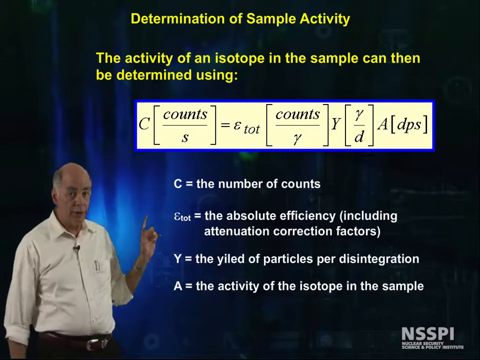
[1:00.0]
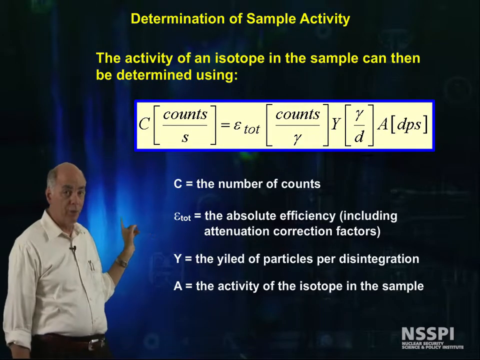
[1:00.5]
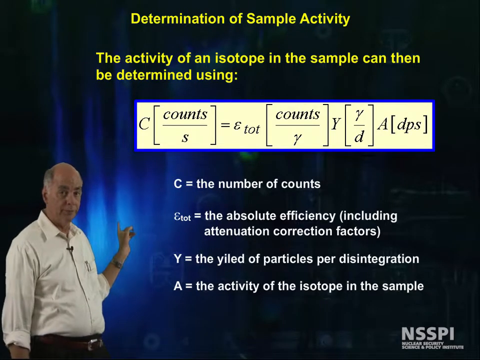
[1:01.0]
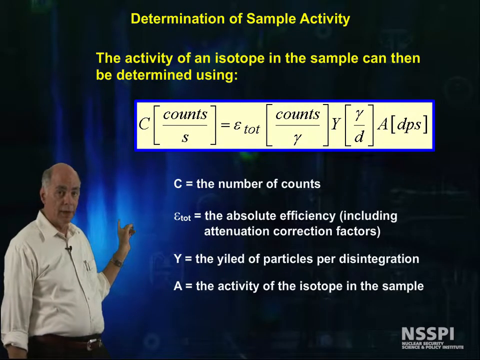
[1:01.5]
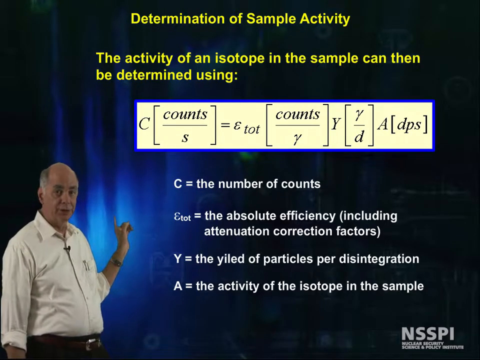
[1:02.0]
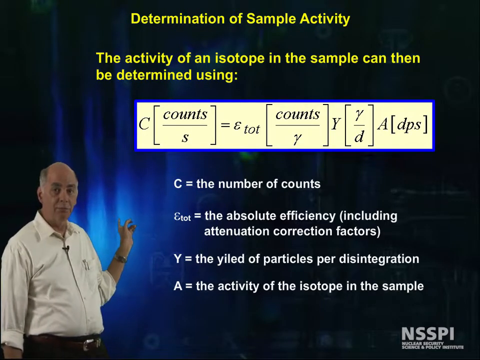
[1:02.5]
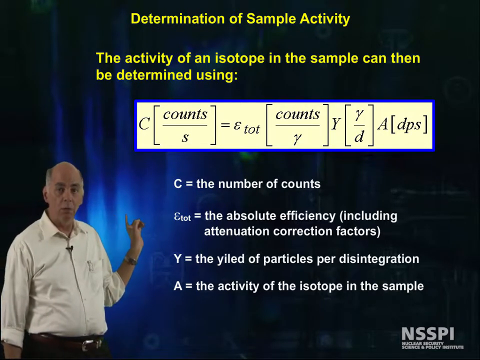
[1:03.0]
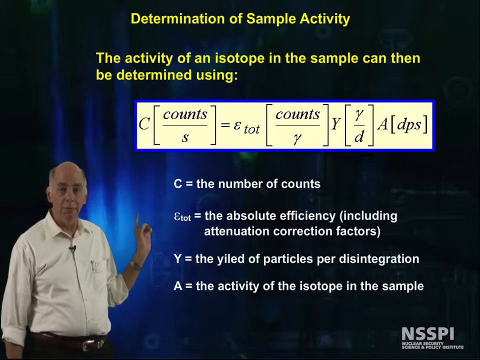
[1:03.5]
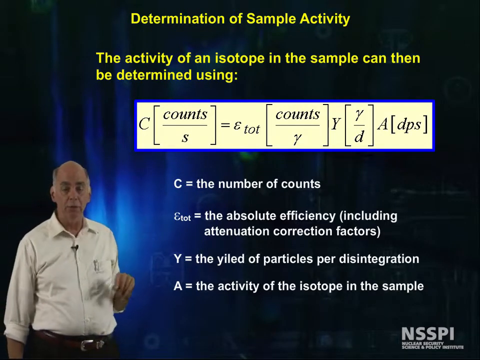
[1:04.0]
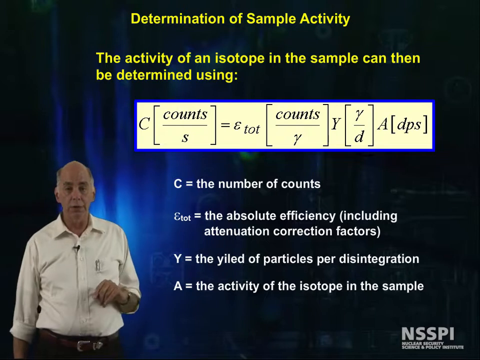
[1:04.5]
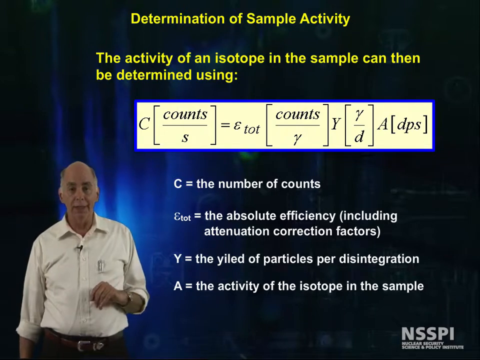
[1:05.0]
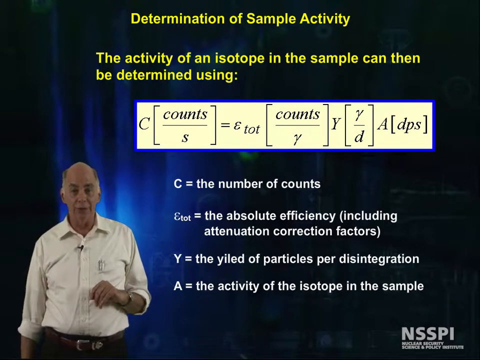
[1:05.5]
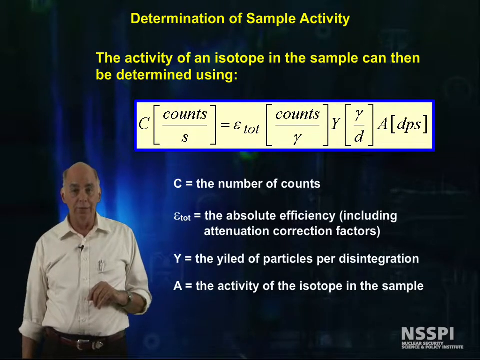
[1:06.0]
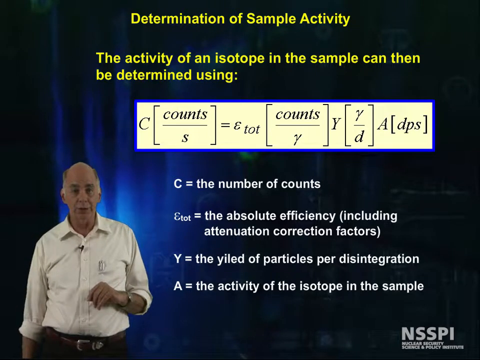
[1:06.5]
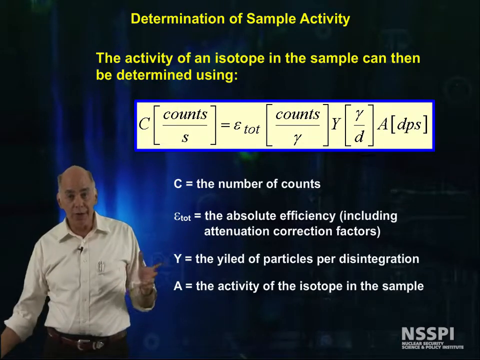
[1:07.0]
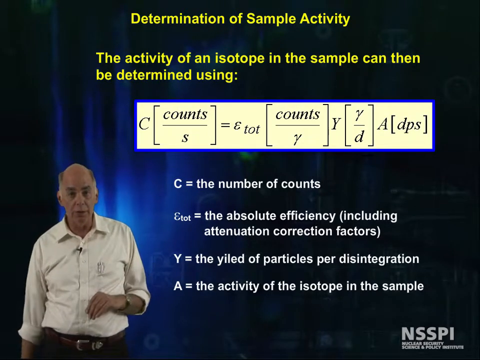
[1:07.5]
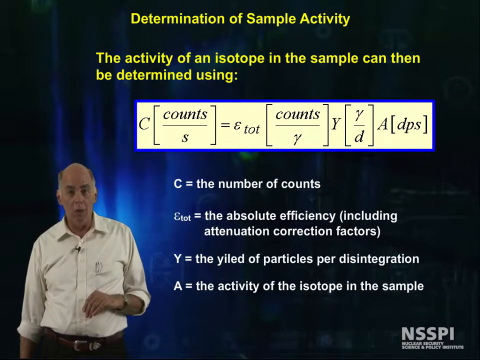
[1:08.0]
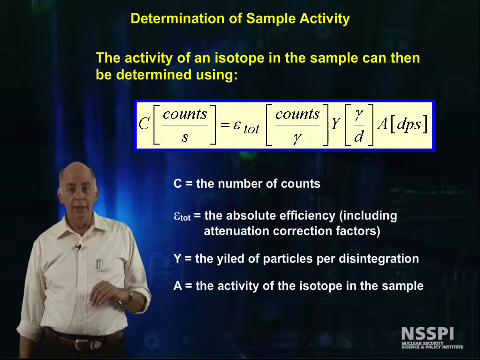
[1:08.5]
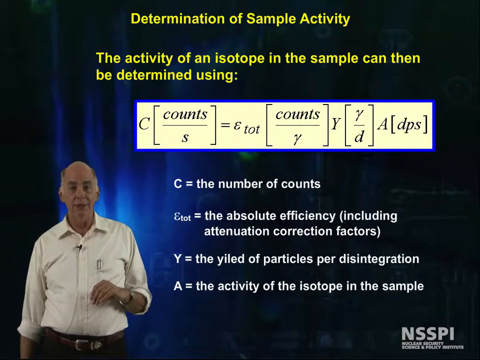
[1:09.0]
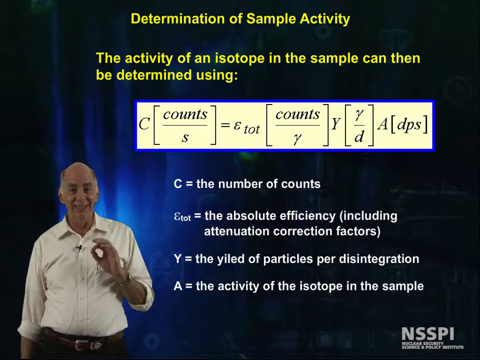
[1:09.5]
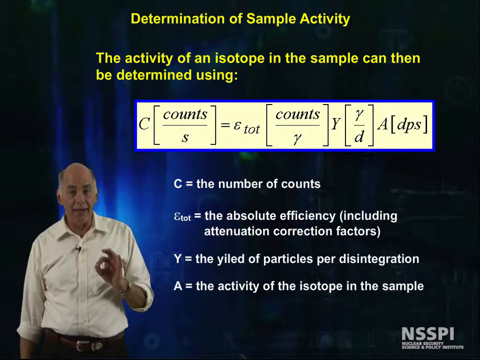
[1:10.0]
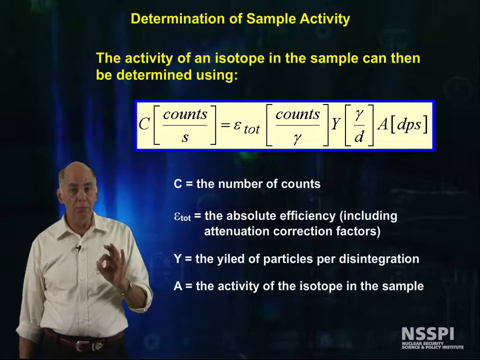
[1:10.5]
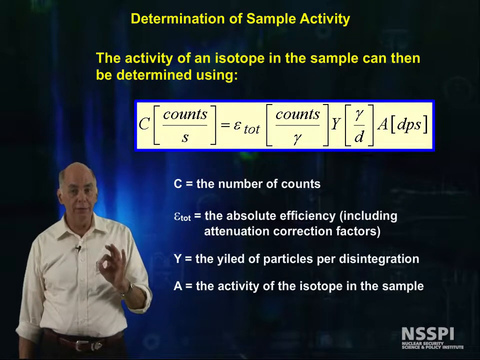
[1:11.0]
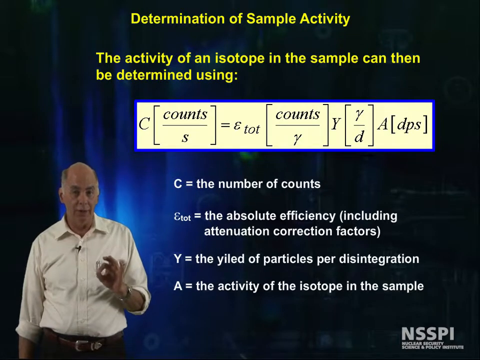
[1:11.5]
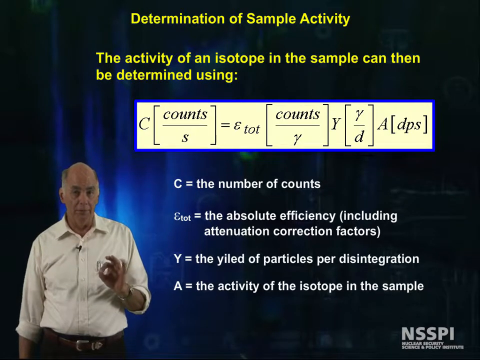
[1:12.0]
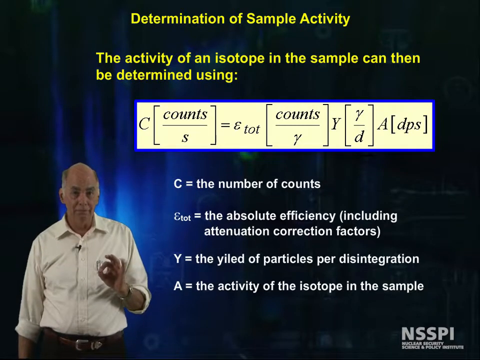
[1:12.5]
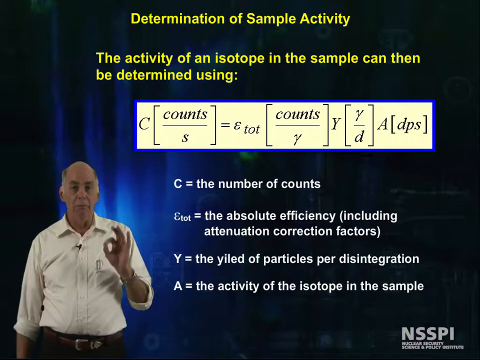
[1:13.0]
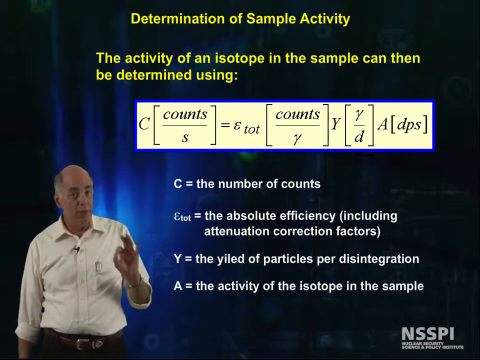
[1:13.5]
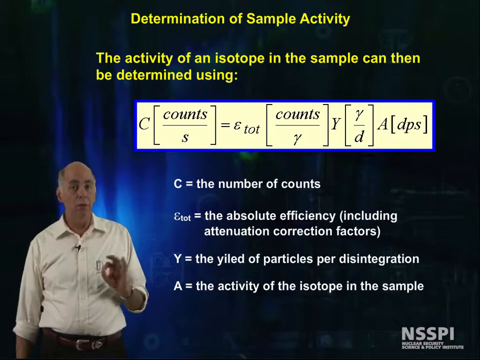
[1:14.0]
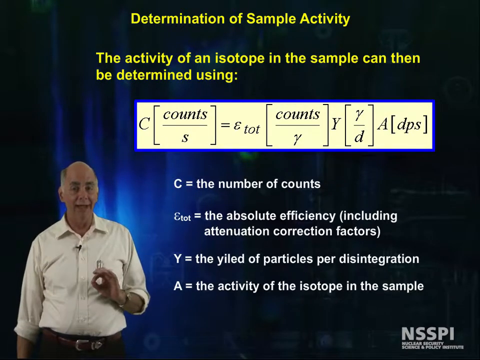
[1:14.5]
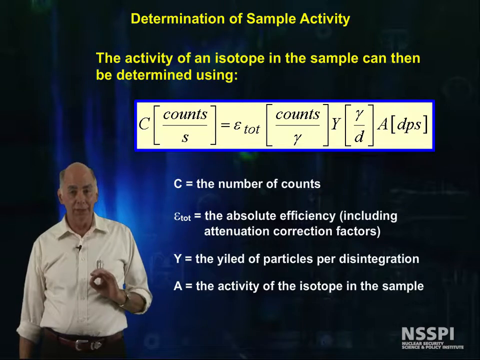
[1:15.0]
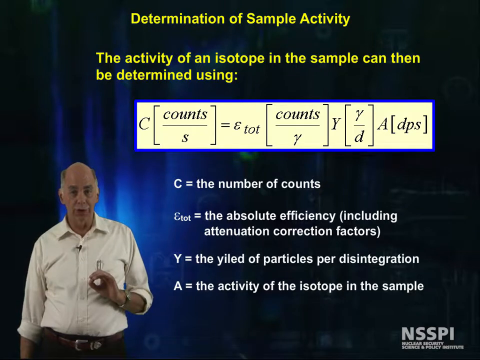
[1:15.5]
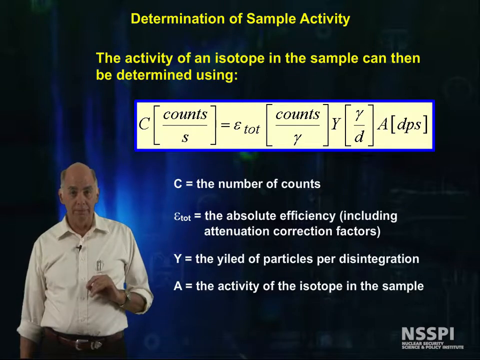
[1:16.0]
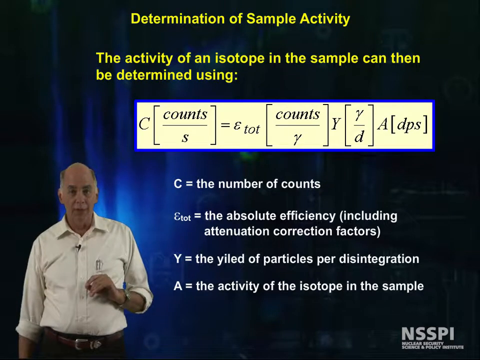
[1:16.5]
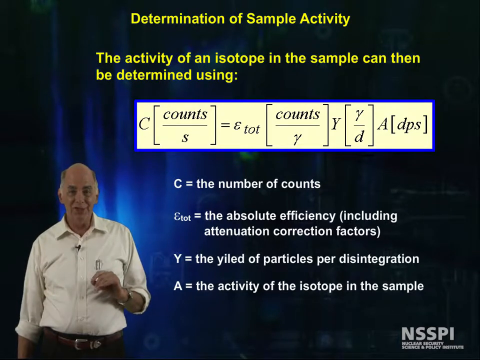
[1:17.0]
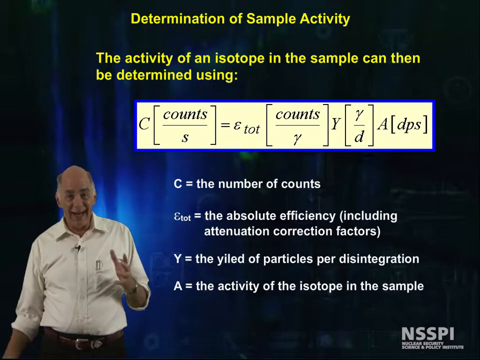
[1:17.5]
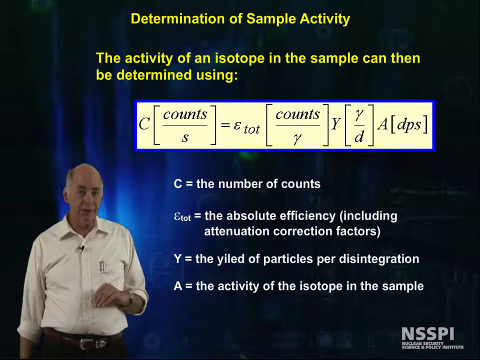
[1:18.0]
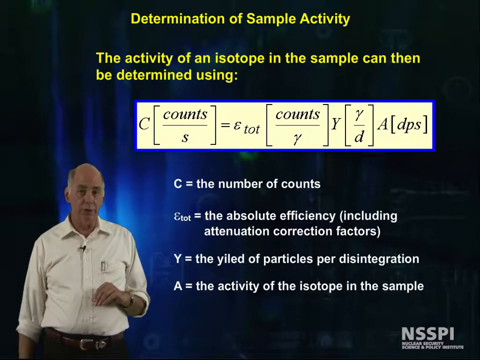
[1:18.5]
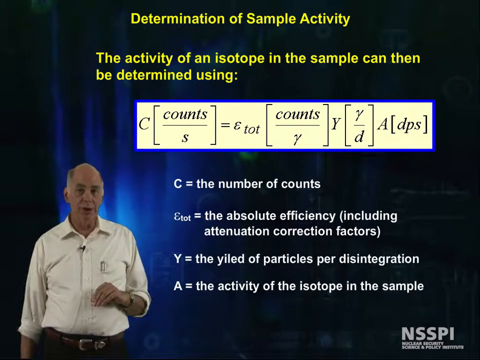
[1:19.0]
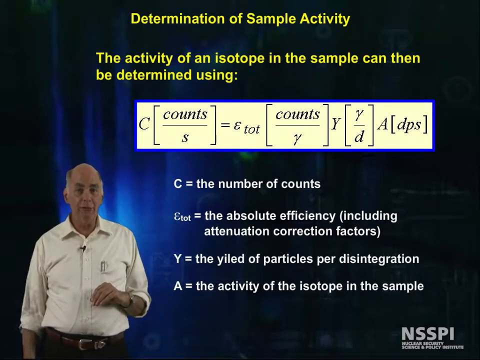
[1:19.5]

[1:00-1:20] A man, possibly a professor or some type of scientific person, gives a presentation or speech about determining sample activity and isotopes. He looks to be in his late 50s or early 60s, is Caucasian, and wears a business shirt. In the lower right corner of the screen is the text or logo "NSSPI" in white, with "Nuclear Security Science and Policy Institute" below it. The screen shows yellow and white text, starting from the top: "determination of sample activity. The activity of an isotope in the sample can then be determined using C equals the number of counts, Y the yield of particles per disintegration, and A equals the activity of the isotope in the sample." The man speaks while moving primarily his left hand, moving slightly back and forth, and with his left hand he makes almost an okay signal as he talks.